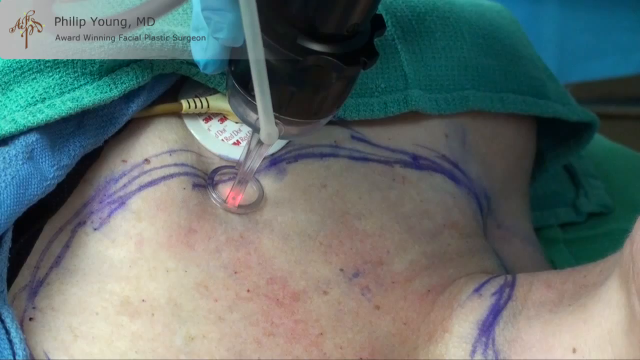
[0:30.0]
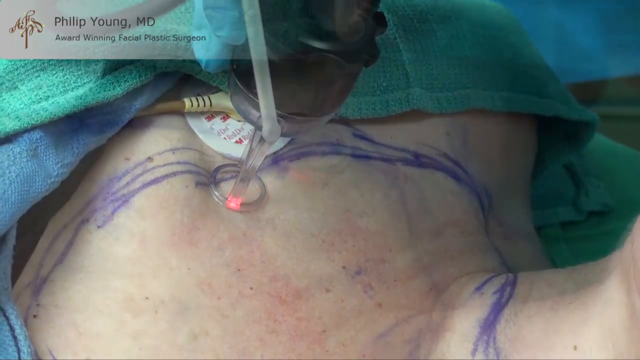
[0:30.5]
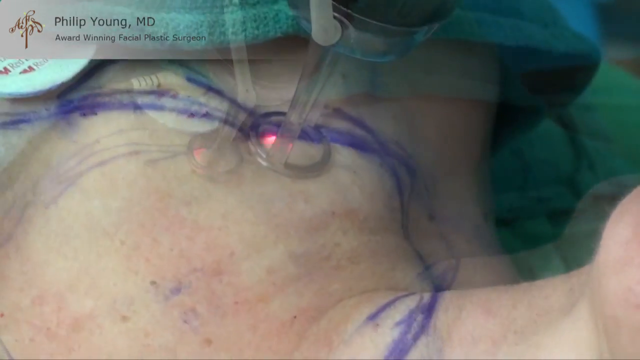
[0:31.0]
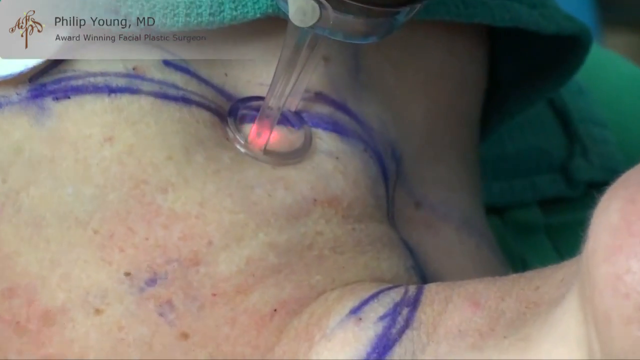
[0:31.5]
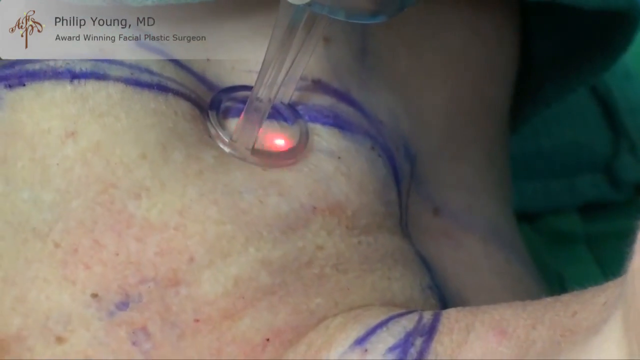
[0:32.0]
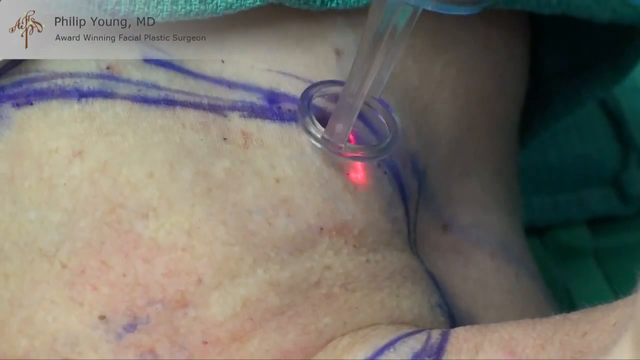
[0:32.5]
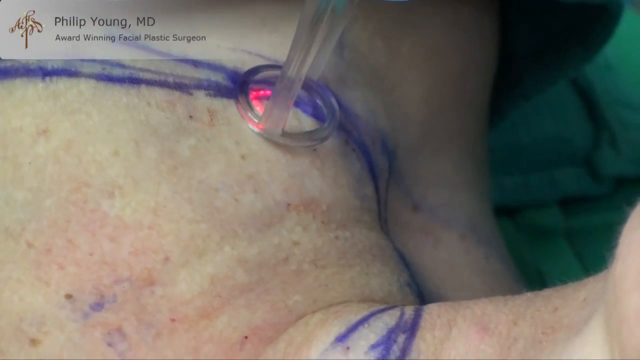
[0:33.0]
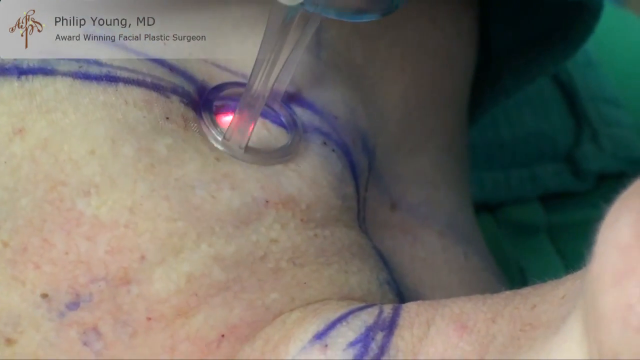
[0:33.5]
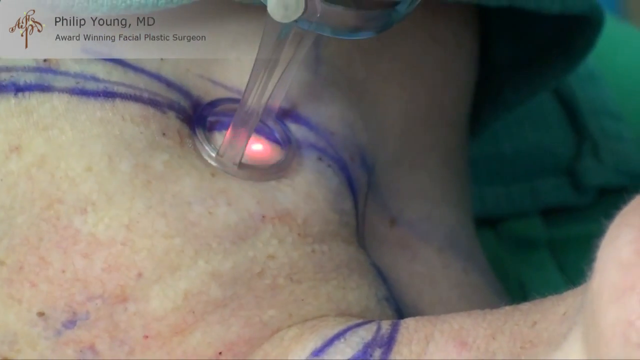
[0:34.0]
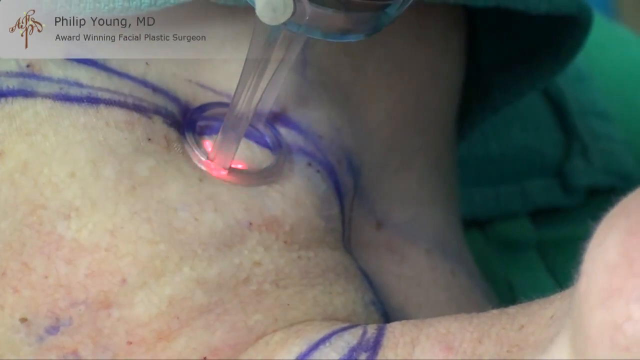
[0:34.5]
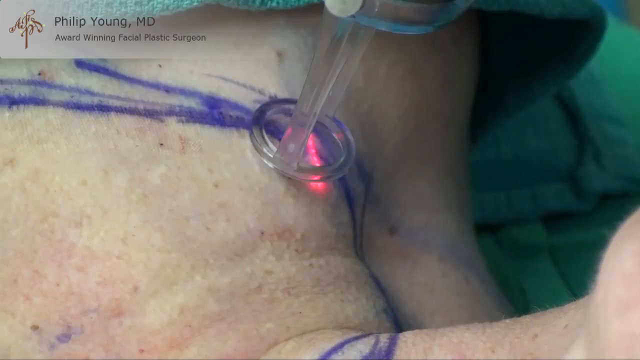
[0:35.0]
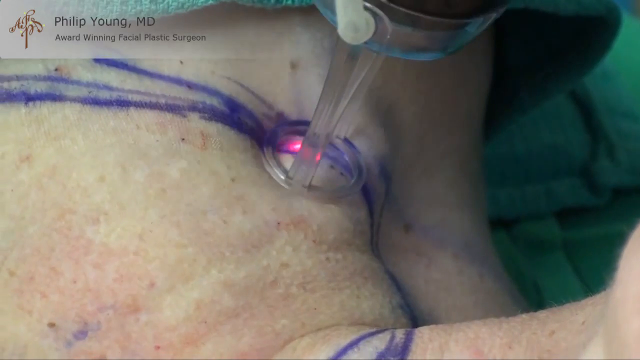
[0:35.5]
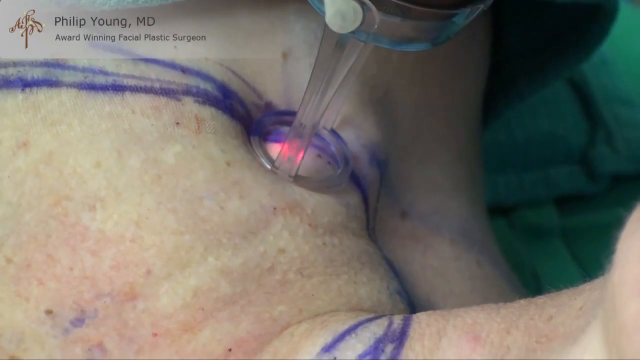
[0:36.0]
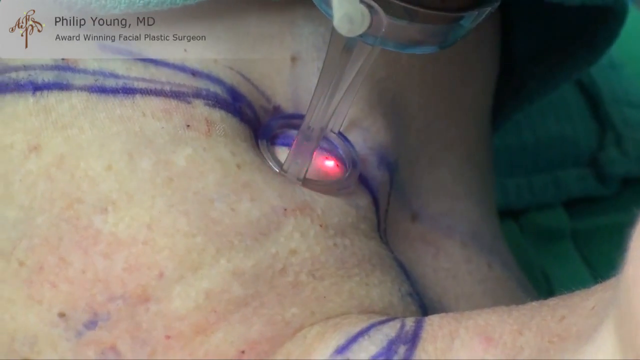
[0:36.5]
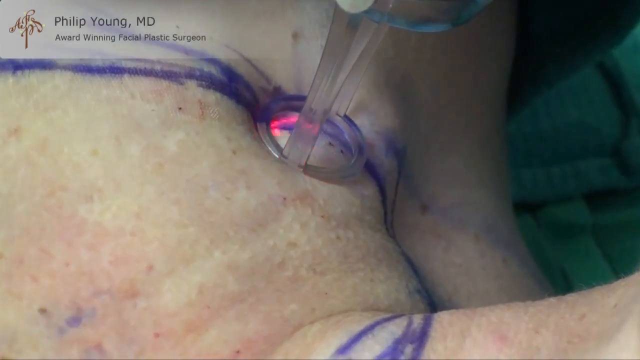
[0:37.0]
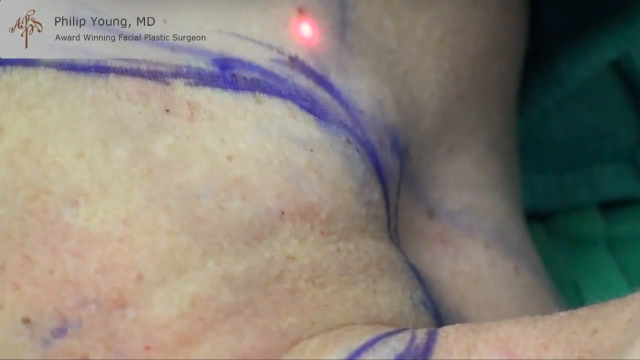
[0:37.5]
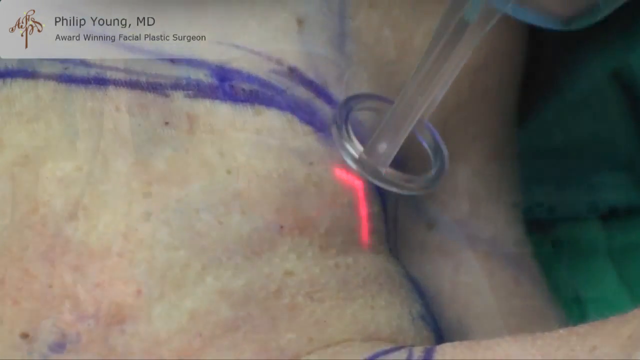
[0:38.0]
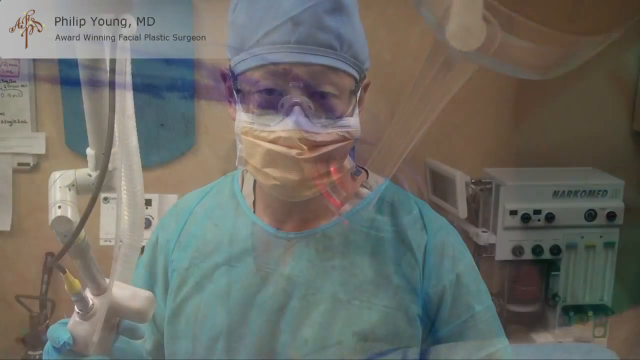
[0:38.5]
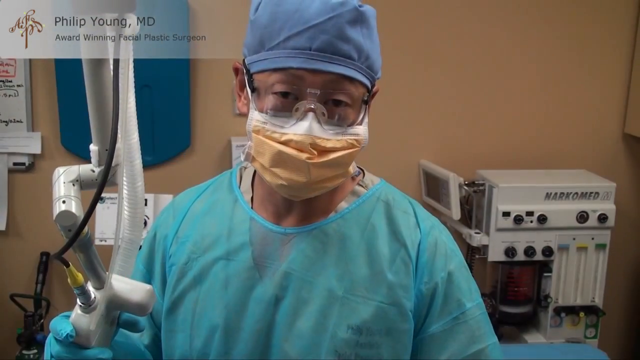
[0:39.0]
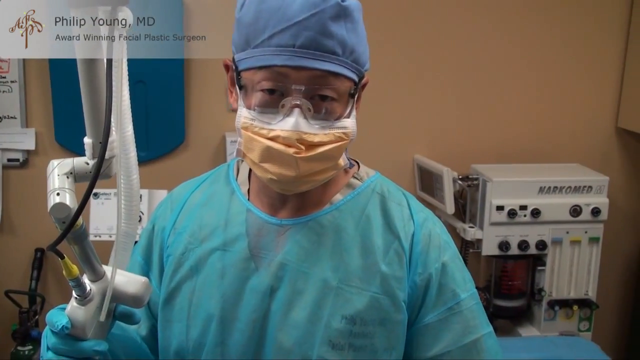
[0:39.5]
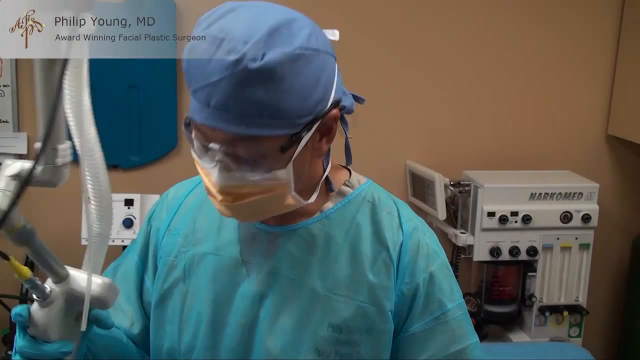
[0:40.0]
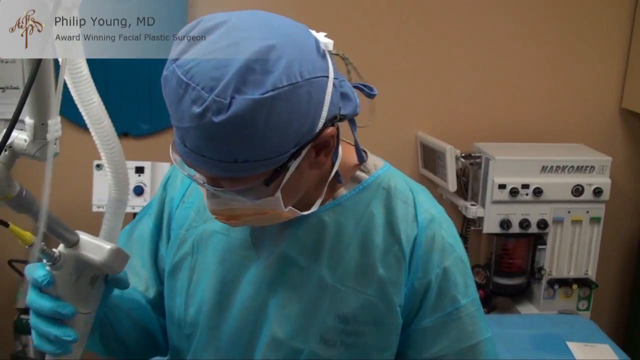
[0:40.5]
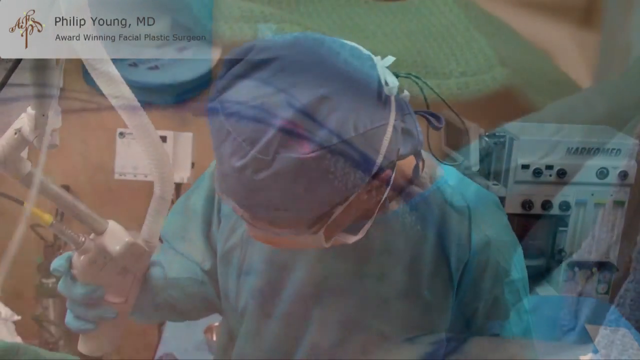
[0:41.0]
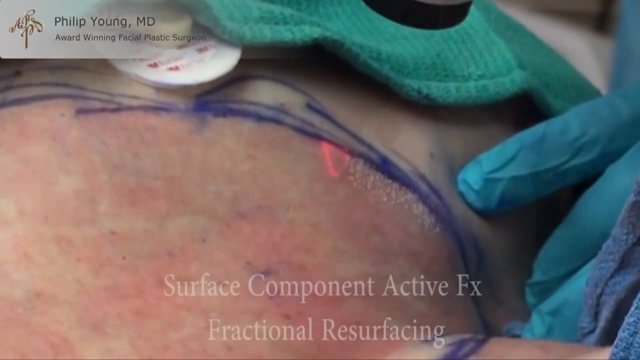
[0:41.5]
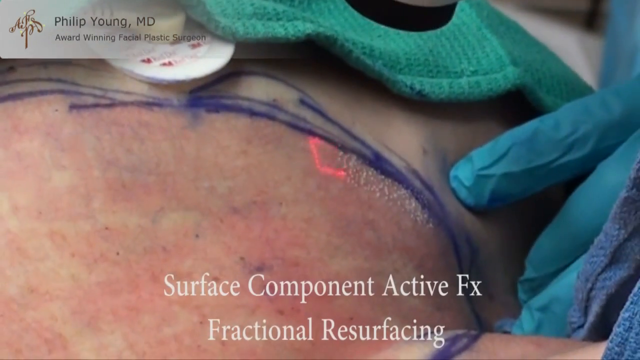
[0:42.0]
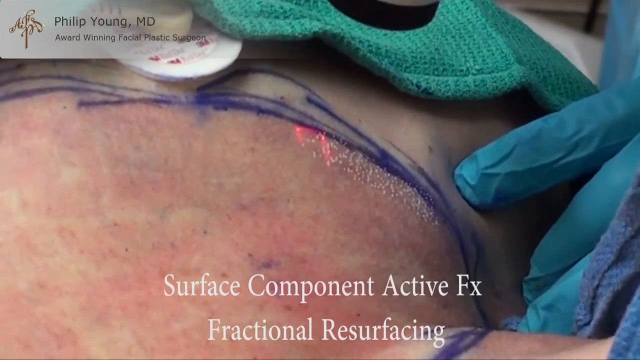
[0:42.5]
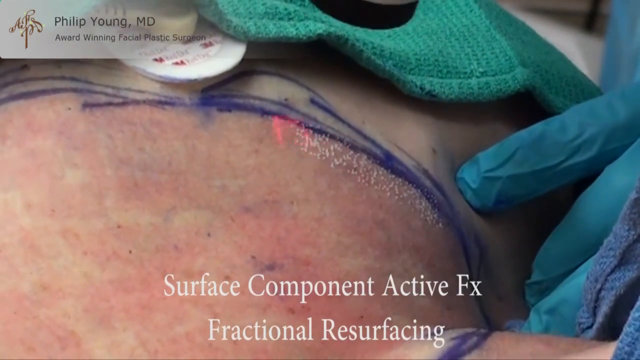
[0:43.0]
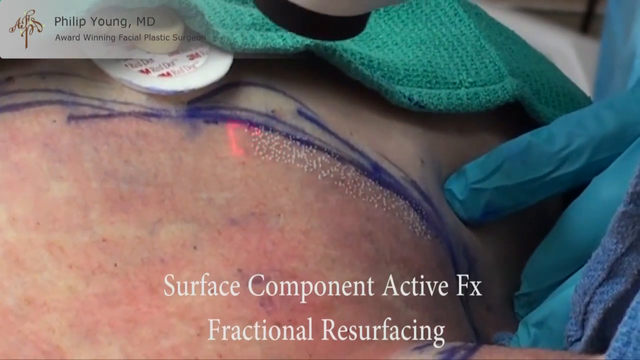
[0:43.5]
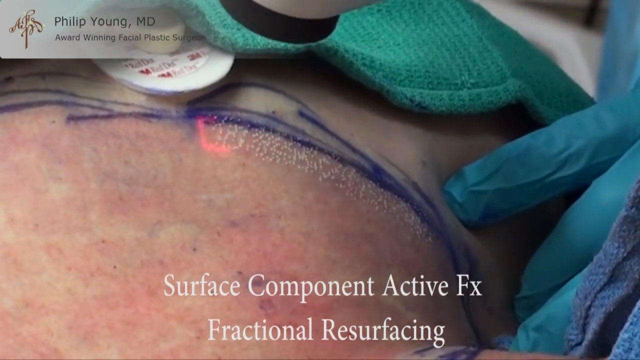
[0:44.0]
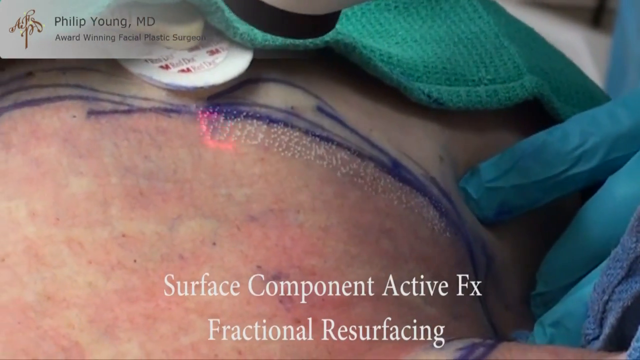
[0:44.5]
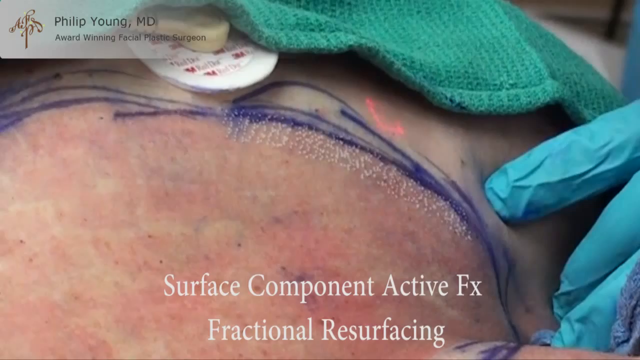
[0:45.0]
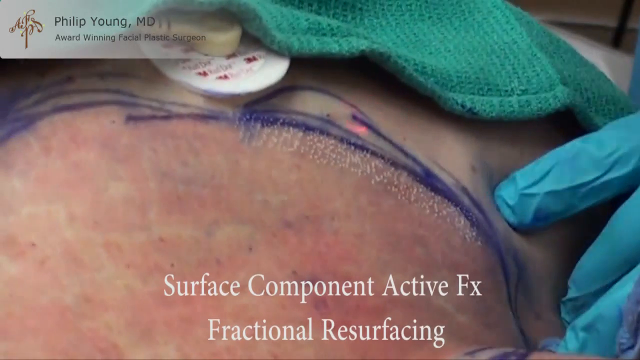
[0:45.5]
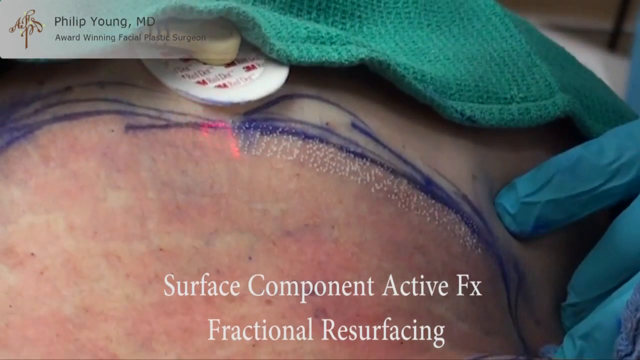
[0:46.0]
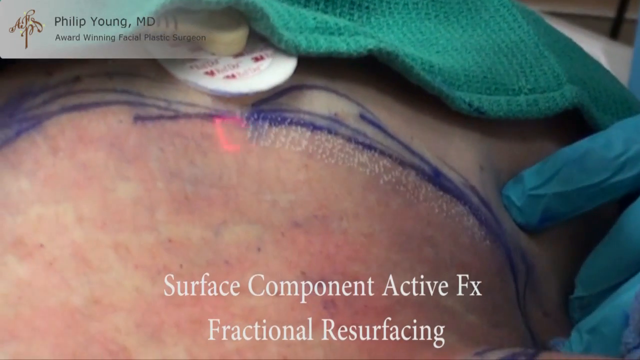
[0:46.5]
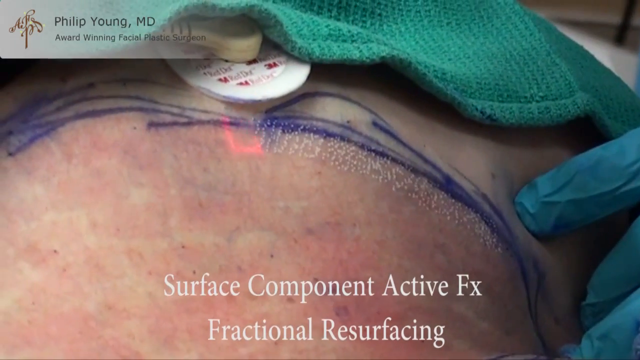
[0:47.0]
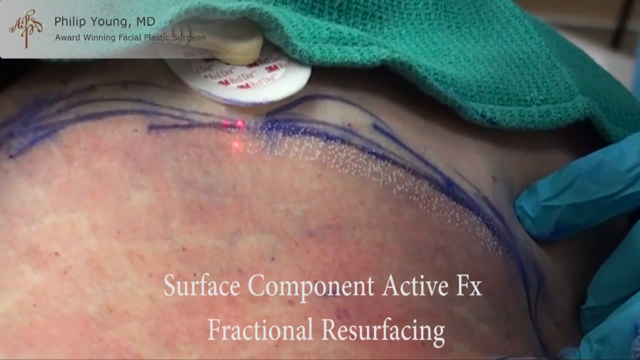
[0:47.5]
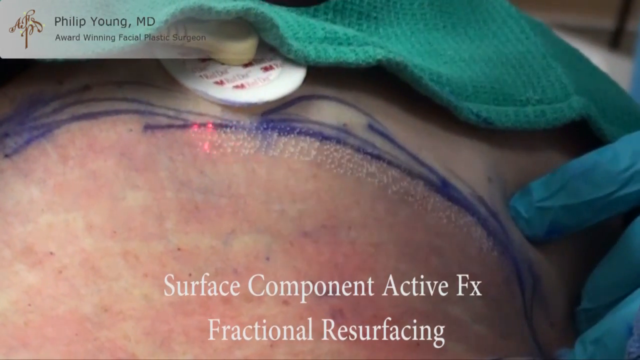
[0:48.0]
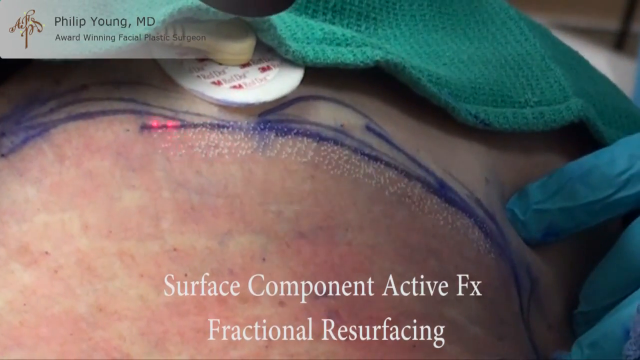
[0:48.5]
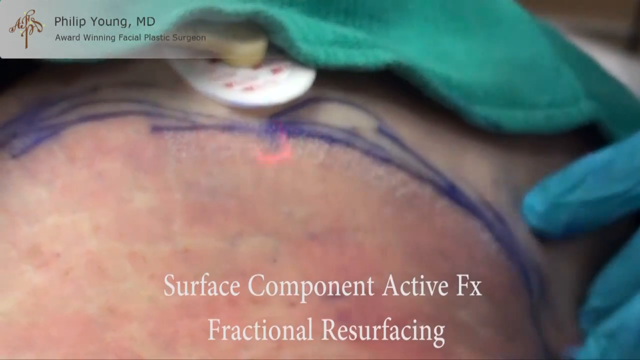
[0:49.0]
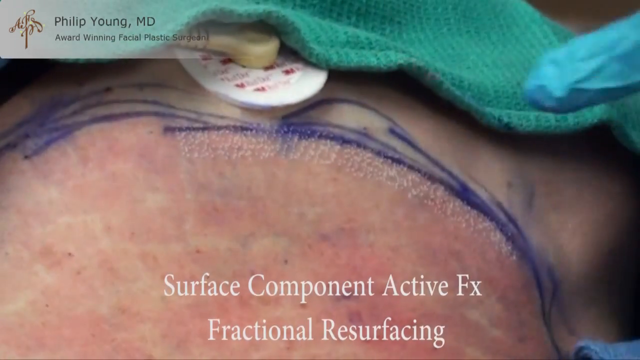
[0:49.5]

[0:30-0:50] A woman is laying down with a lot of blue ink in a circle, kind of on her chest and neck area. A black device with a little silver ring shoots out red light in a circle formation. Green and blue towels are kind of laying on top of her, and a white banner in the top left corner of the screen reads "Philip Young MD award-winning facial plastic surgeon". He holds the black device on her skin while the light bounces around, and then the view is up close, kind of toward her neck and shoulder area, as the light bounces and shakes around the circle. Next, a video shows the doctor wearing a blue cap, a face mask, goggles and a blue shirt, with a machine kind of in front of him as well as another machine. White text reads "surface component active fx fractional resurfacing", and a kind of laser puts a lot of little white dots over the woman's skin. He points to that section.